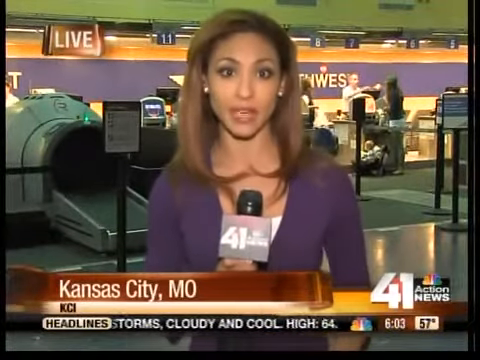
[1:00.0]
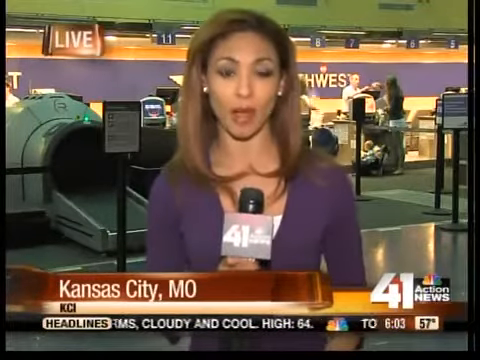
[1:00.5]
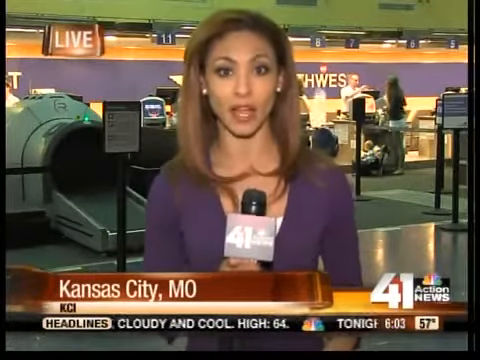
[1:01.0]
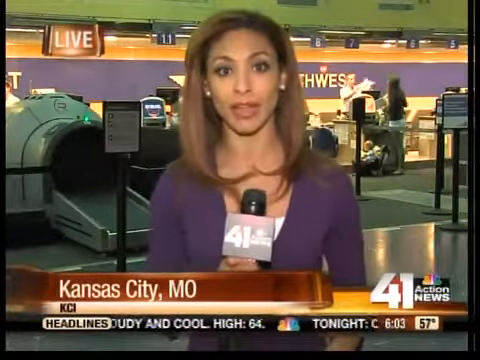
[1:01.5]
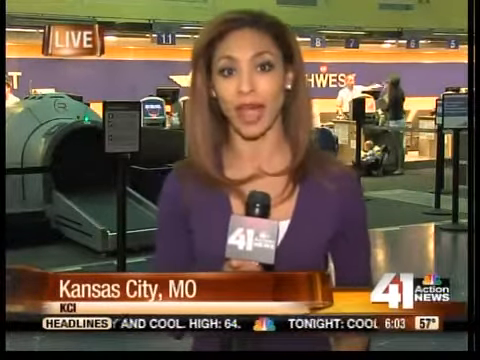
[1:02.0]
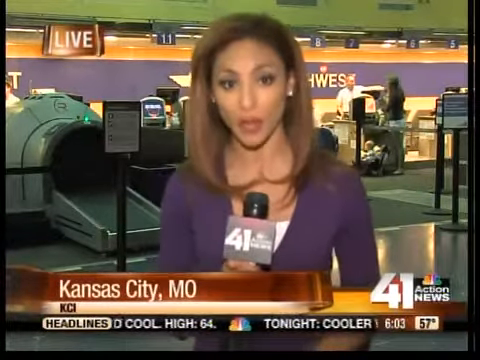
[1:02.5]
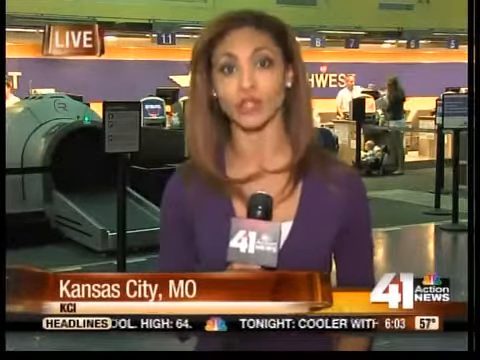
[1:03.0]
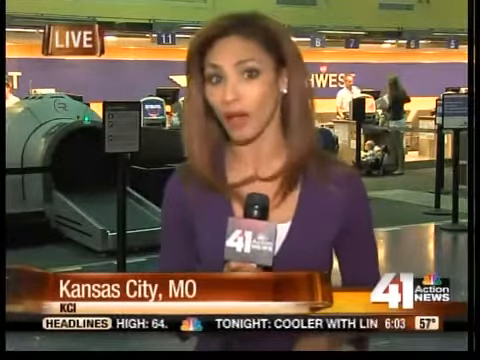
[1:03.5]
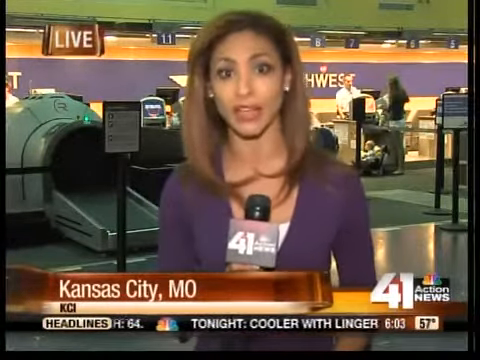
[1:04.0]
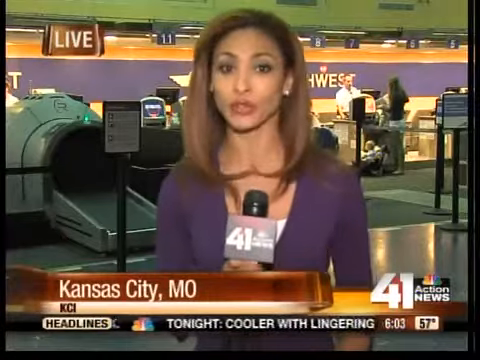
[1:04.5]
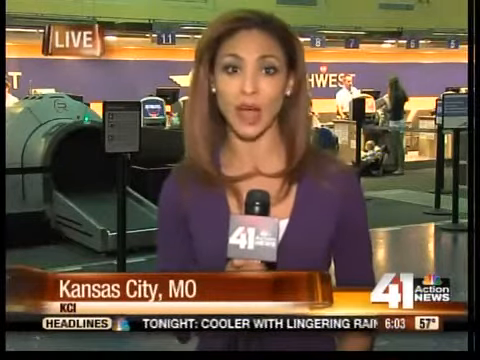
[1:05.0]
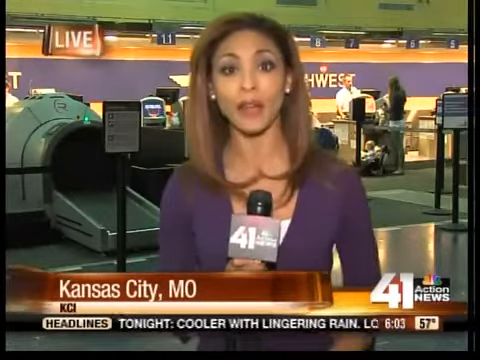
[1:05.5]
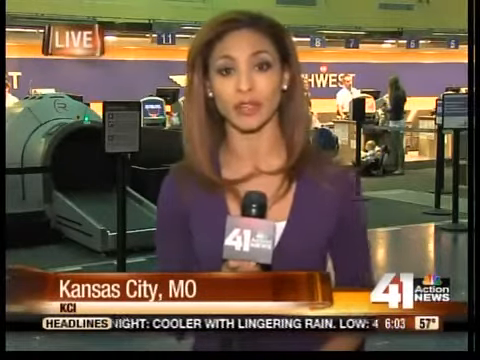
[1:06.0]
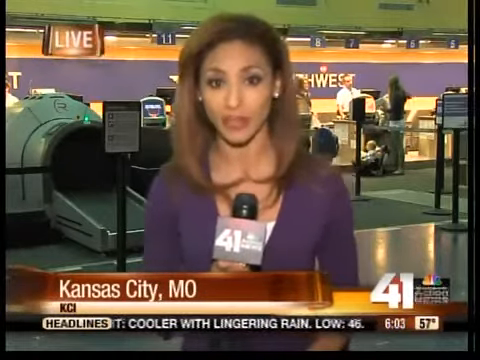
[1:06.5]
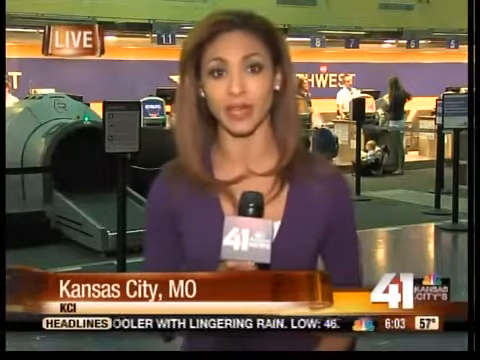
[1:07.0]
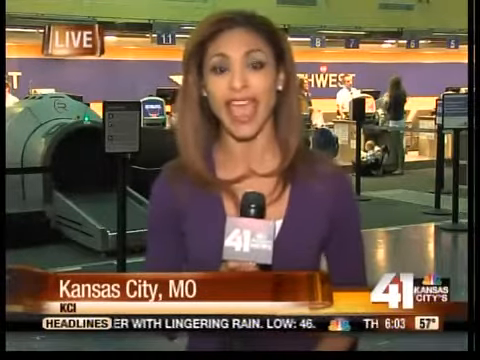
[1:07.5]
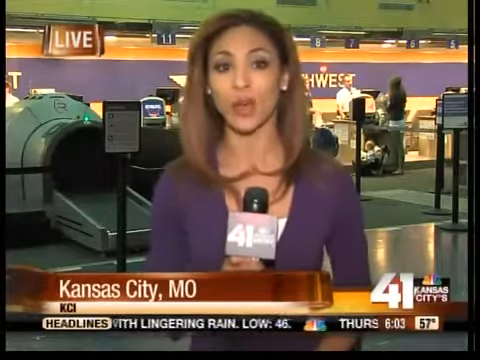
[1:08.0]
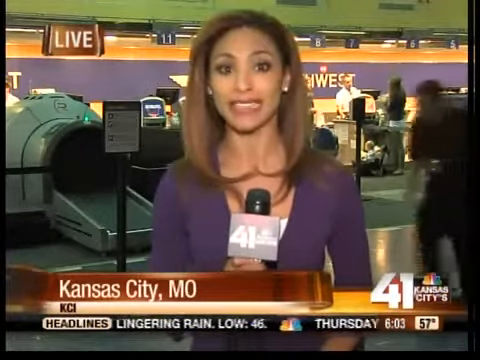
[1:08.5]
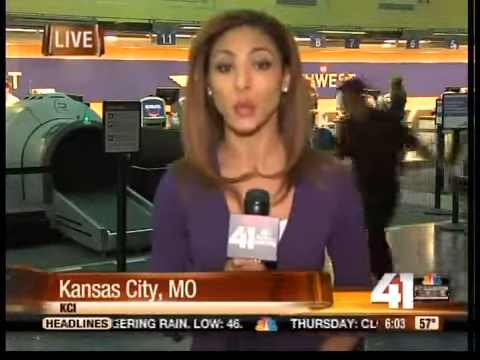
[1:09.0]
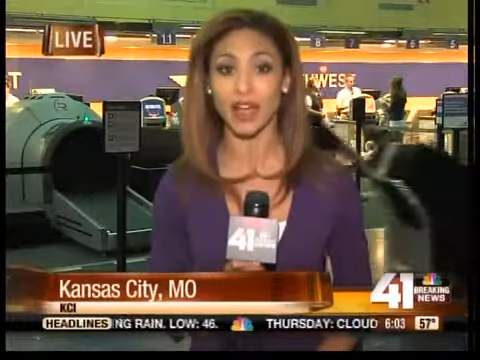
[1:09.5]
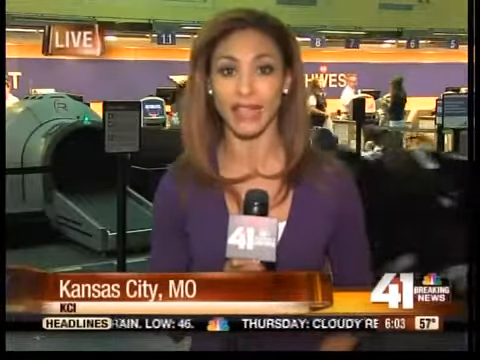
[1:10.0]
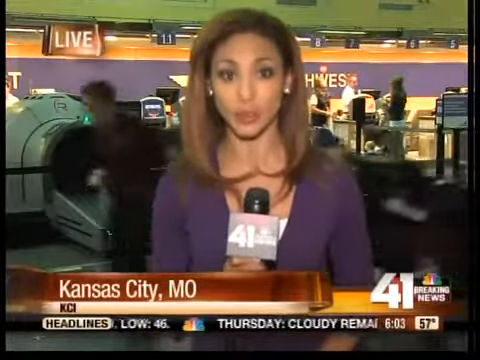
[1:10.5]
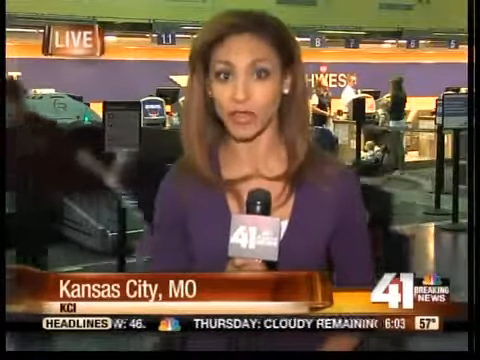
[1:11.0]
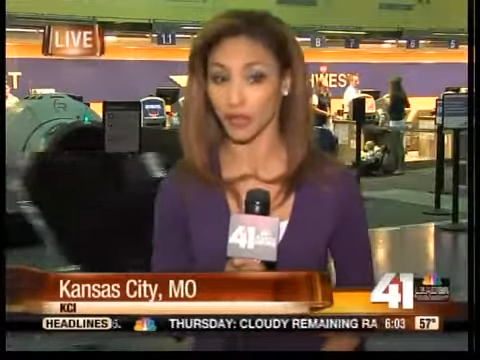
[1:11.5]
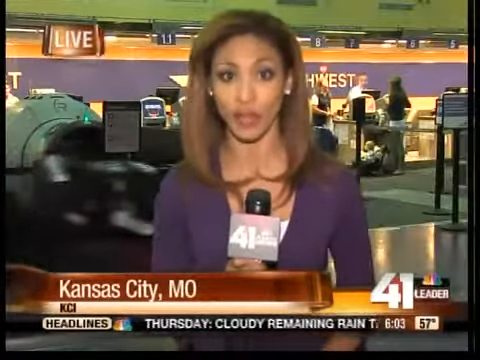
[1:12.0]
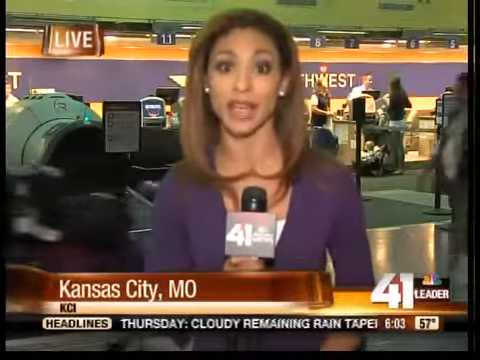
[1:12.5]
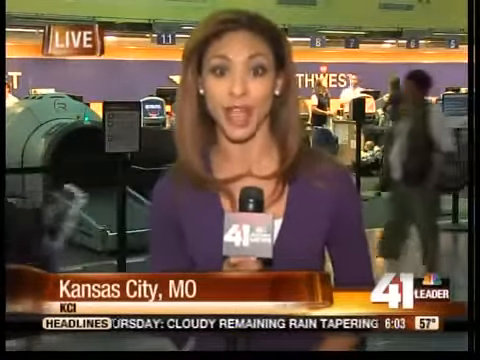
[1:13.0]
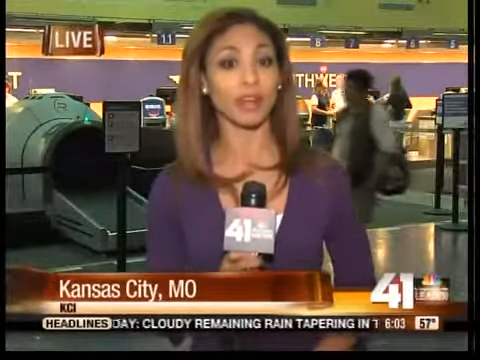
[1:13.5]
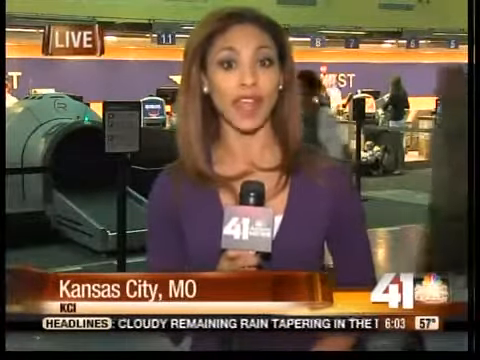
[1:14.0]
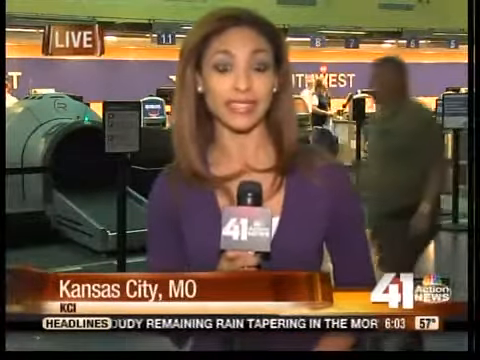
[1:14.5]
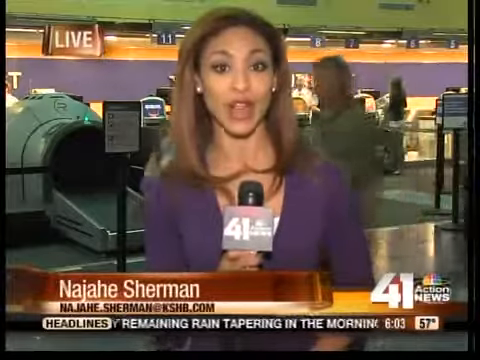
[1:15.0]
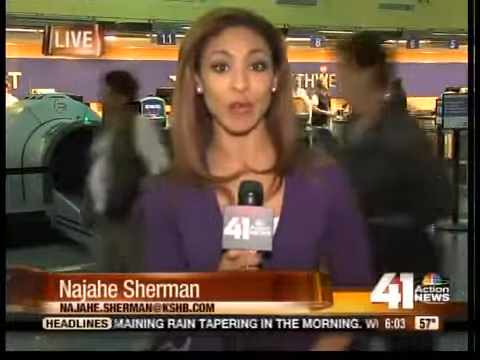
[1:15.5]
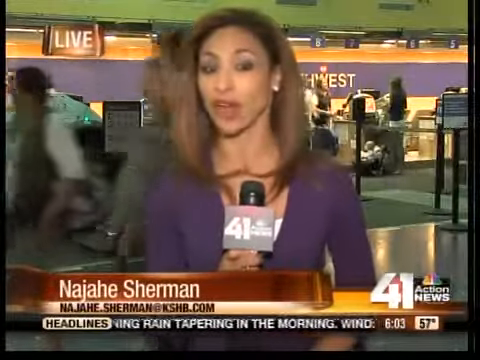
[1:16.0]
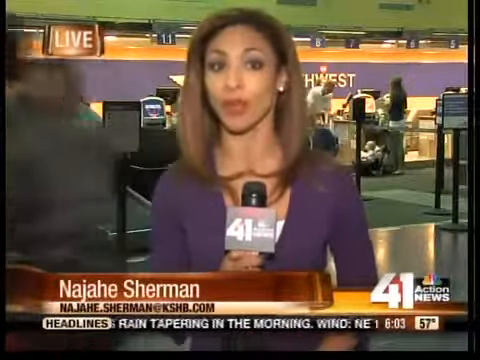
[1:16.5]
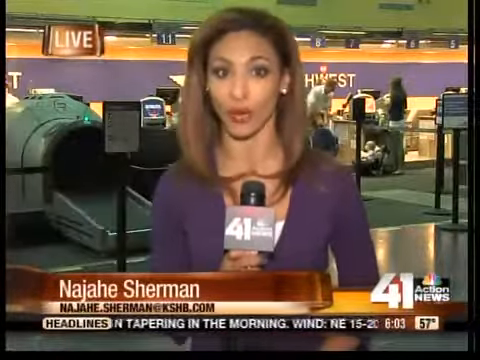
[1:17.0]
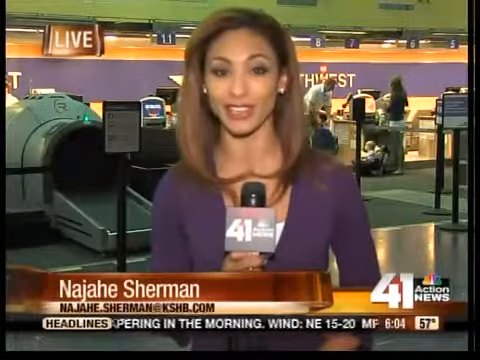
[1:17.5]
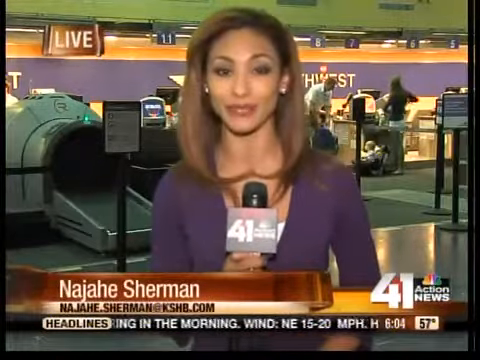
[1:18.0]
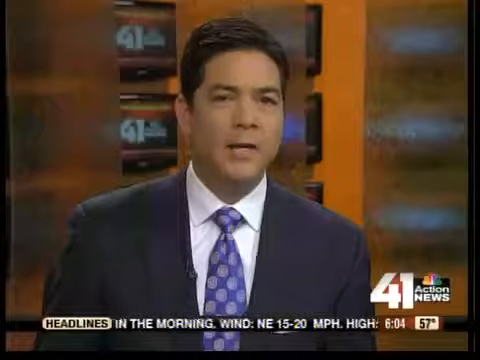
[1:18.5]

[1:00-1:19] The presenter holds a microphone with a big block marked "41 Action News", the 41 in big bold letters. She wears pearl earrings and light orange lipstick, has light brown hair in a side part, and wears a purple top with a white top underneath. She reports back to the newsroom while, behind her, multiple people walk through the airport and people are behind a desk. Behind her is a woman in white shorts, a purple top and pumps, with a child sitting on a car seat on the floor. A man with a white complexion, dressed all in black, pushes a stroller full of suitcases.